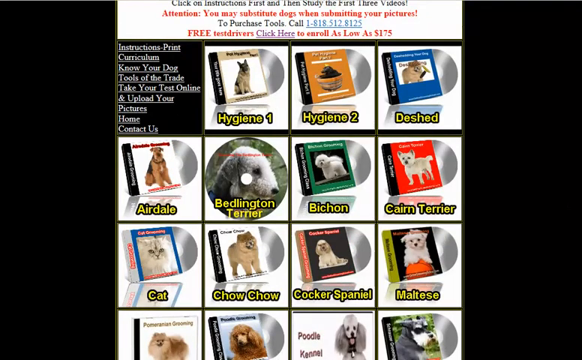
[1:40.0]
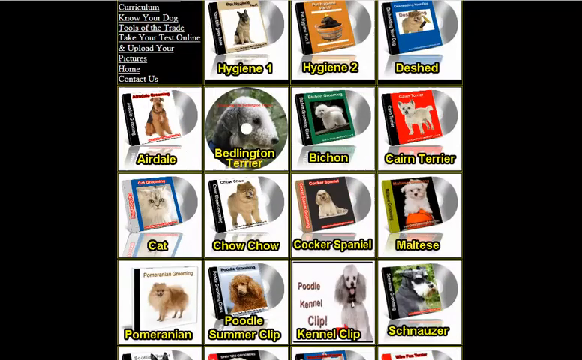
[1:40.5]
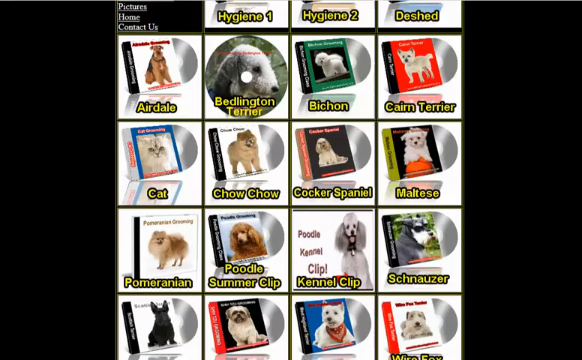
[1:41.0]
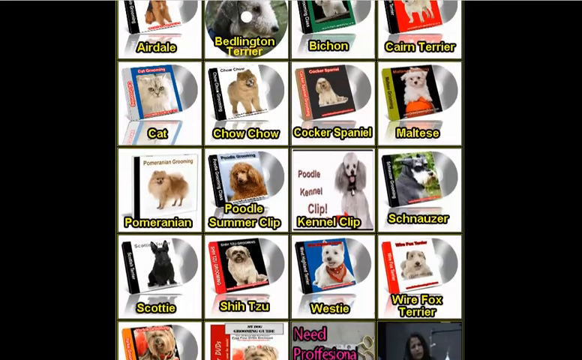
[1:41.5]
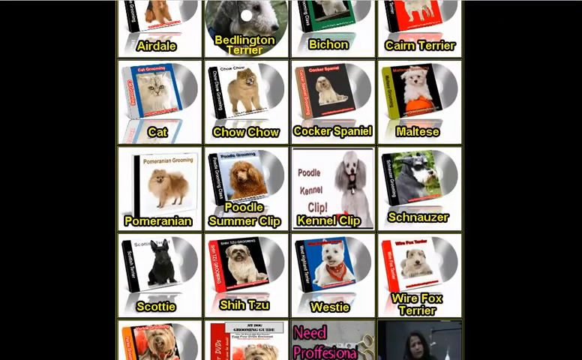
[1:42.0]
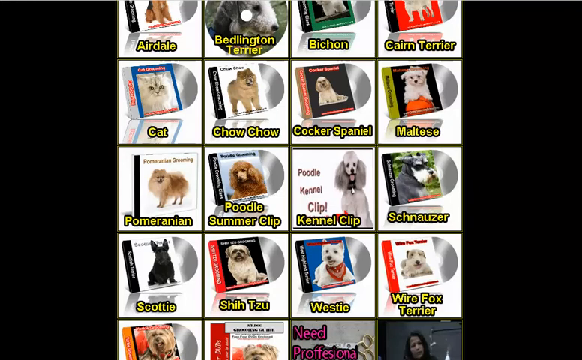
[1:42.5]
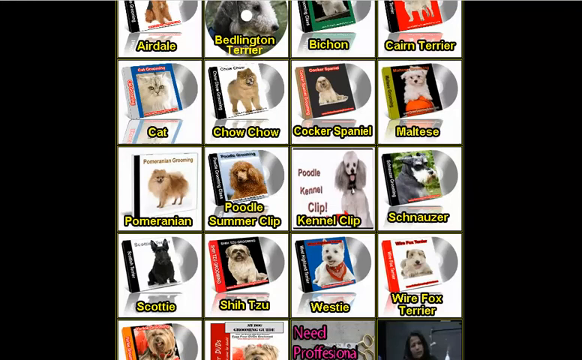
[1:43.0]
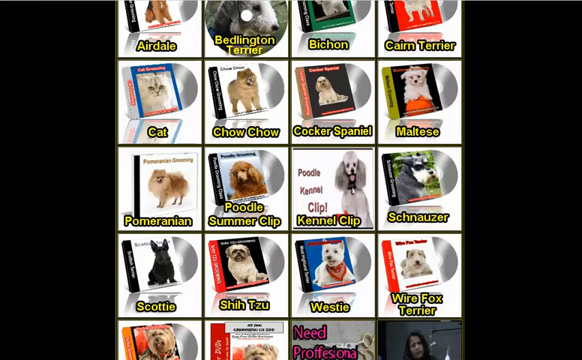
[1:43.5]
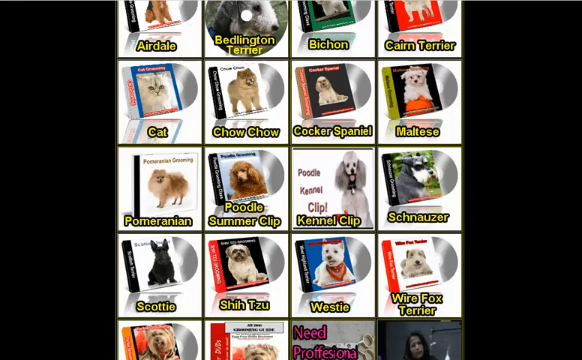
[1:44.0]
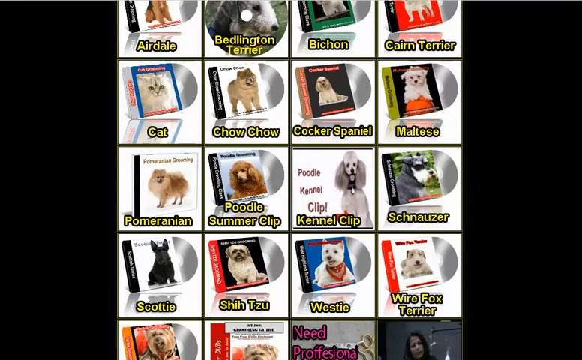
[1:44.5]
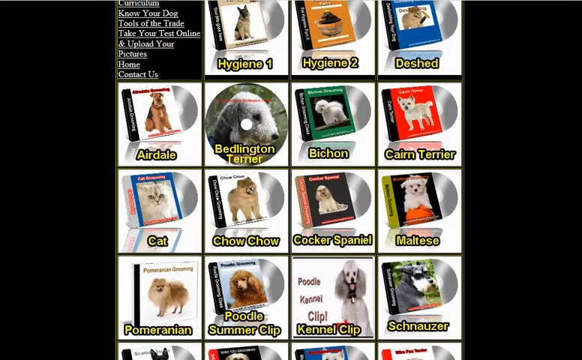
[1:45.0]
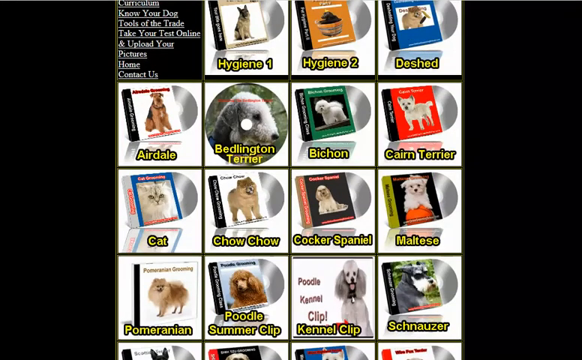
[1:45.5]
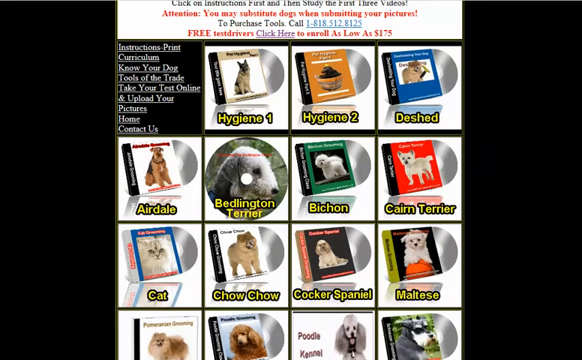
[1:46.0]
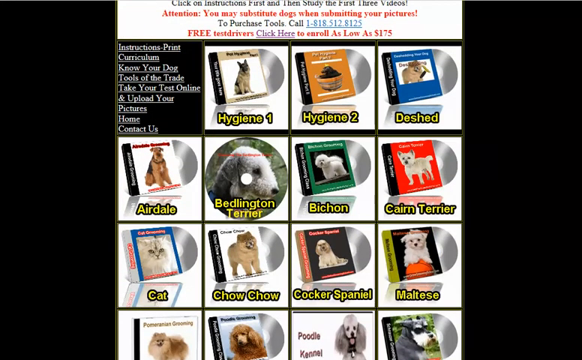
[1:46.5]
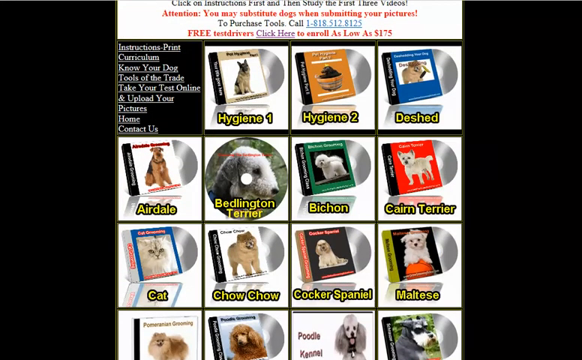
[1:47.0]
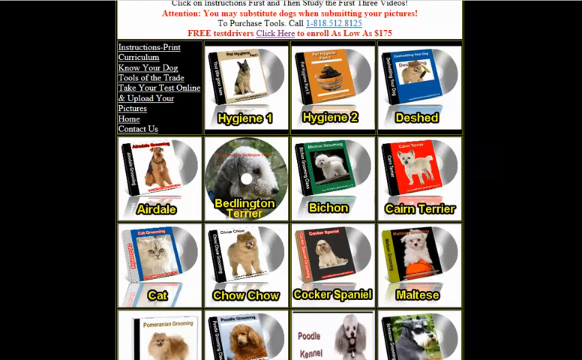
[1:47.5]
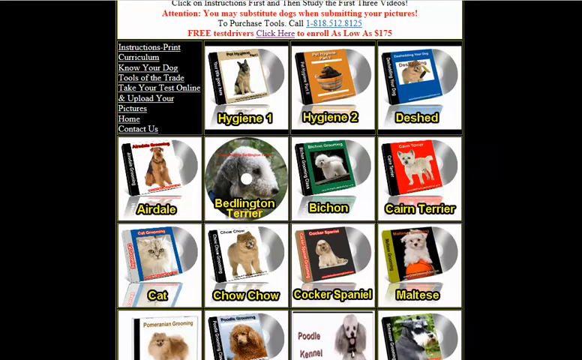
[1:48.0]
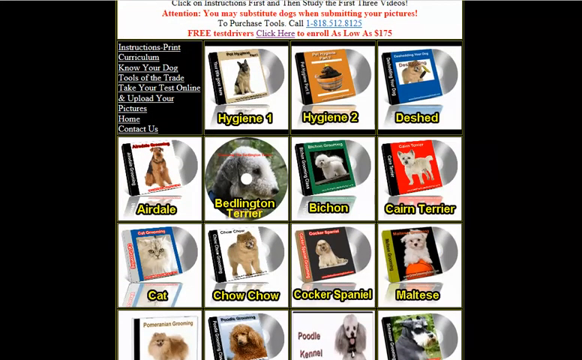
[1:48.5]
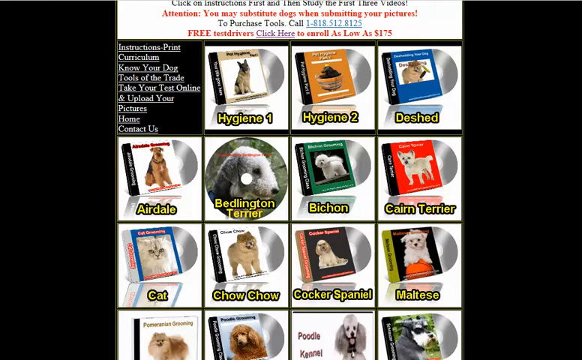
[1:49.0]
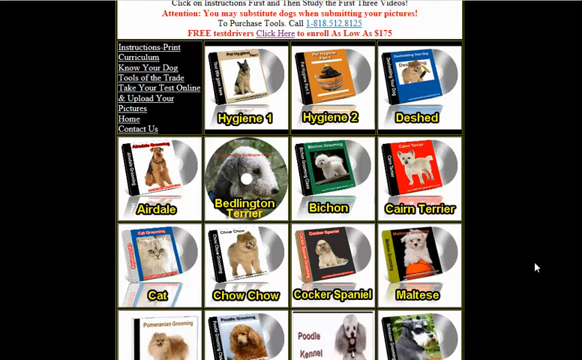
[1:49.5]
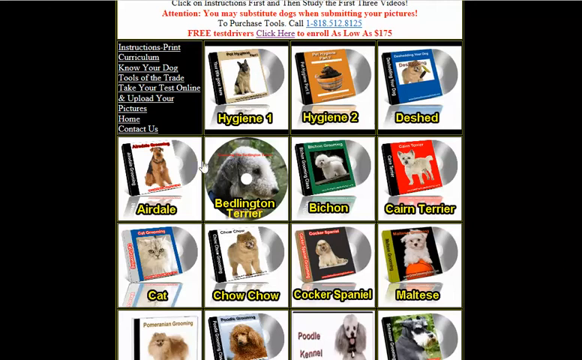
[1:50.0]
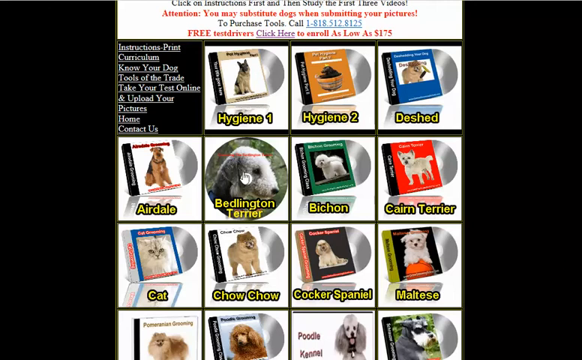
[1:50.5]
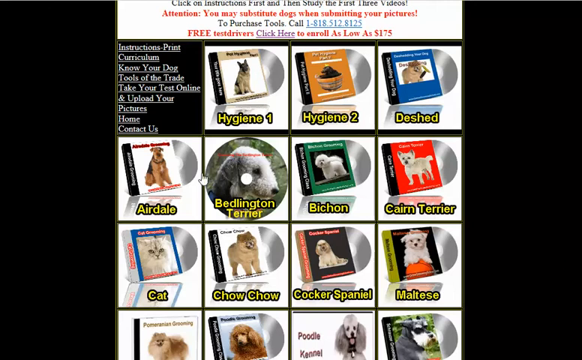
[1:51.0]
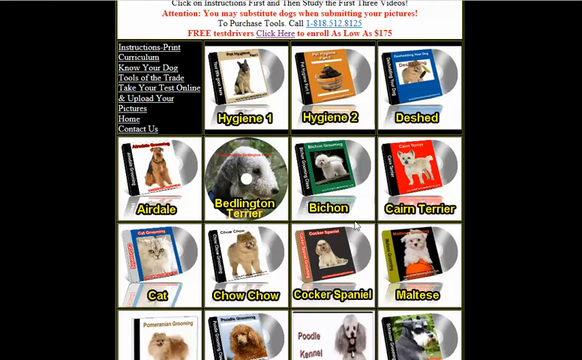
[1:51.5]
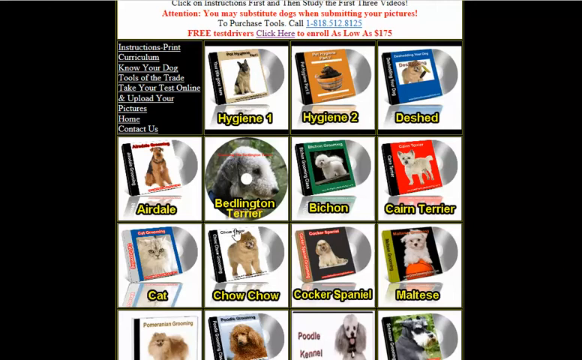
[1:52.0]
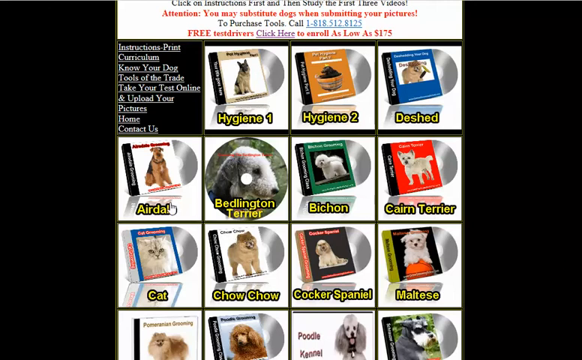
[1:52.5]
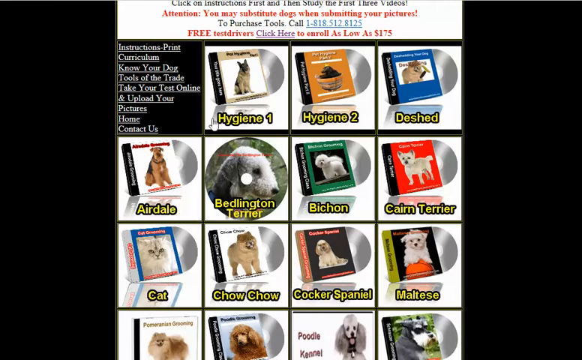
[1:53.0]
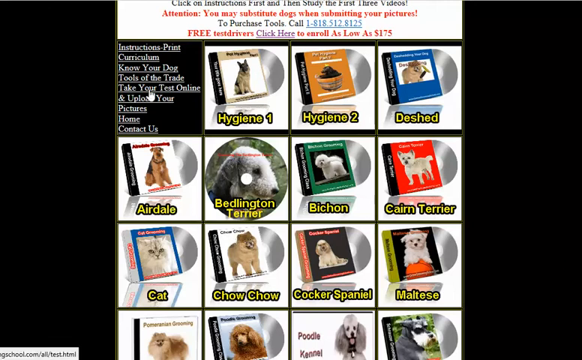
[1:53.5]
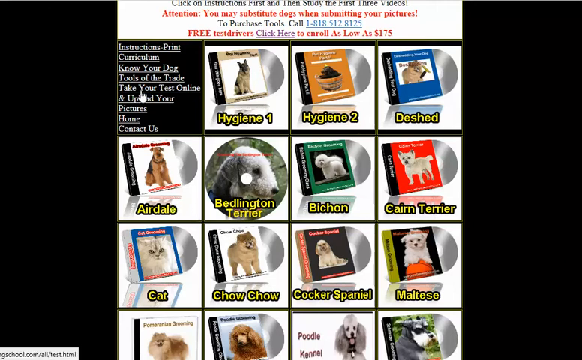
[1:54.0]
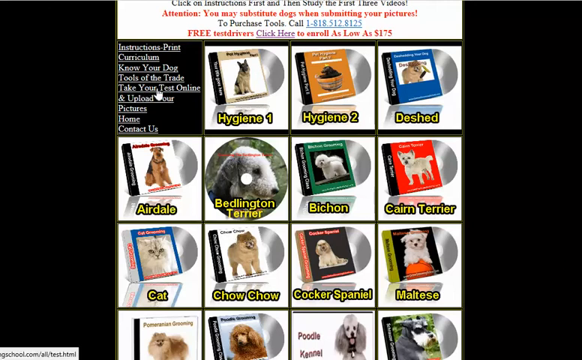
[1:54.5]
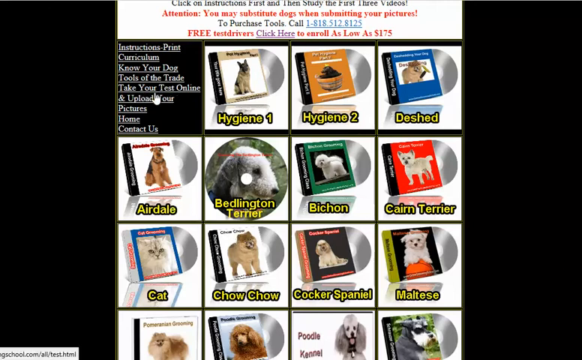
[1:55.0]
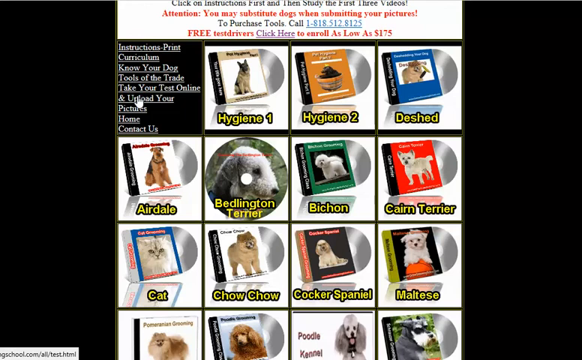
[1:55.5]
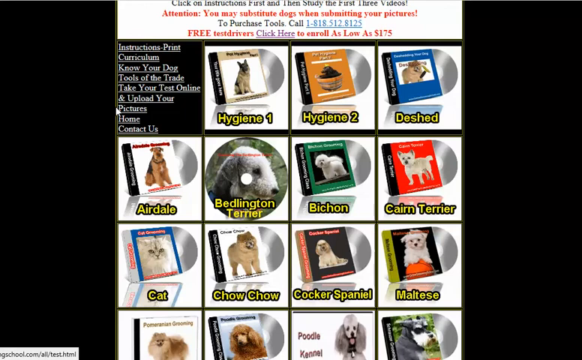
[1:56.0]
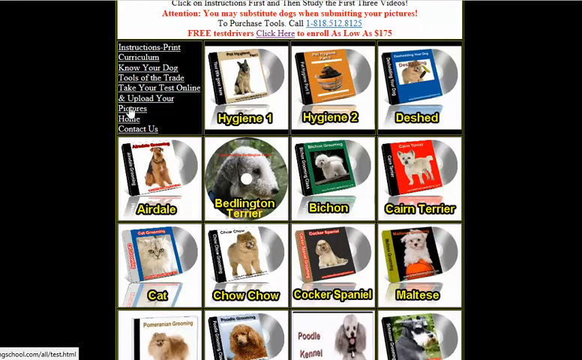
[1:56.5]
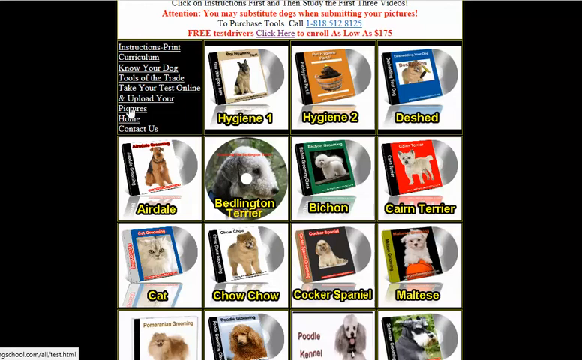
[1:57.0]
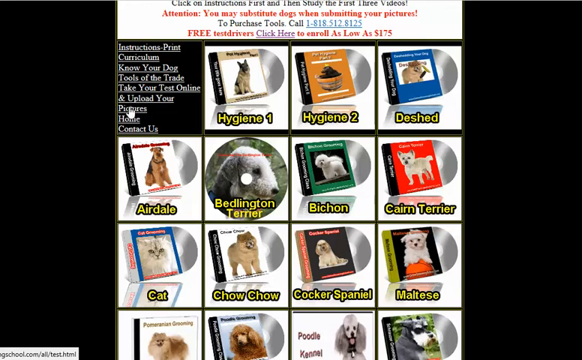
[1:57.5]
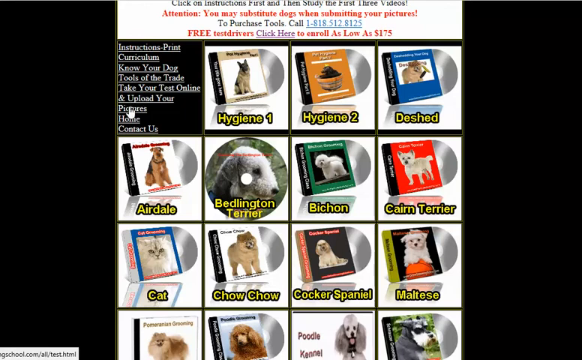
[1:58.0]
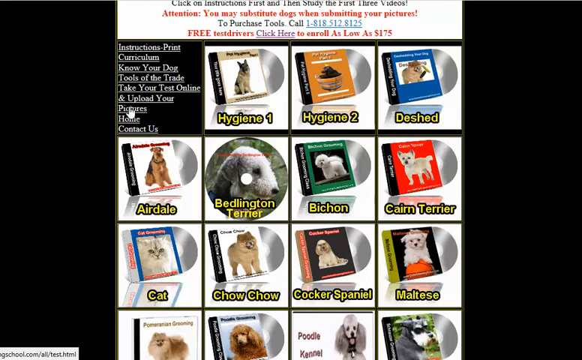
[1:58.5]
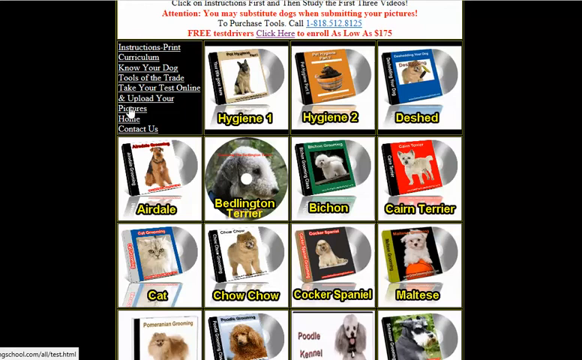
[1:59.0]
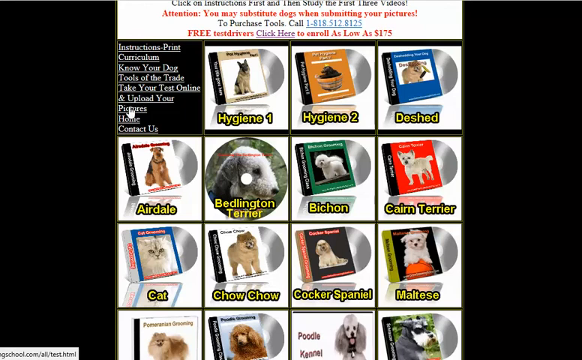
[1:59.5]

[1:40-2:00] The mouse moves through the page of discs. The page has black borders on each side, and on the left-hand side of the centre panel is a series of clickable subjects including instructions, print, curriculum, know your dog, tools of the trade, take your test online and upload your pictures, home, and contact us. At the top of the page it says "click on instructions first and then study the first three videos. Attention, you may substitute dogs when submitting your pictures." It also says "To purchase school tools call" with a telephone number, and "free test drive click here to enrol as low as $175". Below are rows and columns of discs for Hygiene 1, Hygiene 2, D-Shed, Airedale, Bedlington Terrier, Bichon, Cairn Terrier, Cat, Chow Chow, Cocker Spaniel, Maltese and more; each disc has the appropriate dog pictured on the front, except the cat disc. The mouse scrolls the page down to more DVDs, including Pomeranian, Poodle Summer Clip, Kennel Clip, Schnauzer, Scotty, Shih Tzu, Westy and Wire Fox Terrier. The page is then scrolled up again, and the mouse moves around the Bedlington Terrier disc and some of the other discs before hovering over "take your test online and upload your pictures".